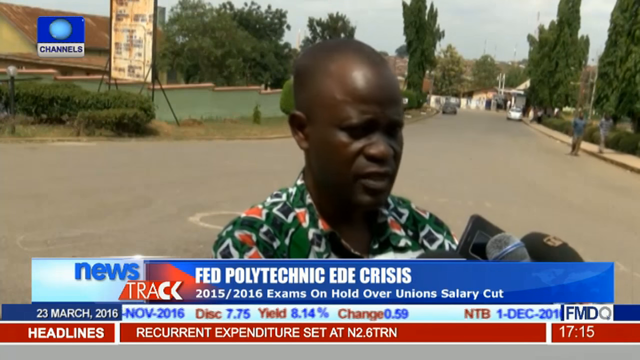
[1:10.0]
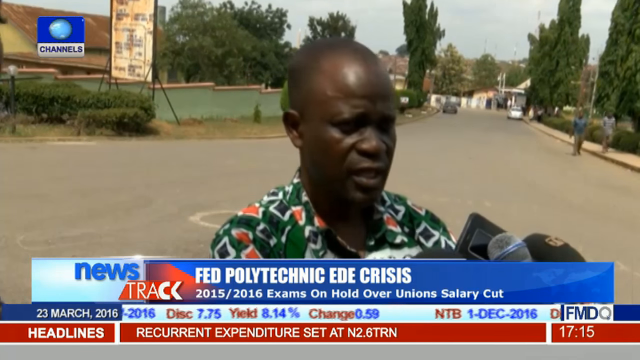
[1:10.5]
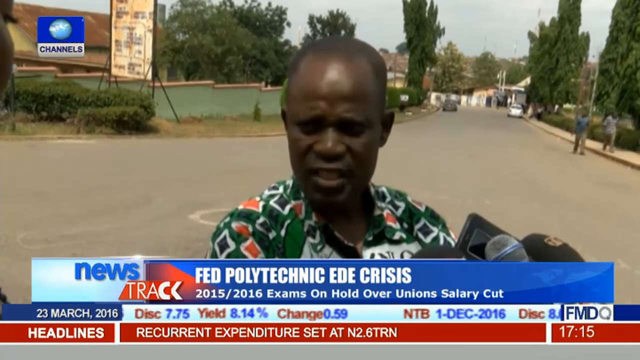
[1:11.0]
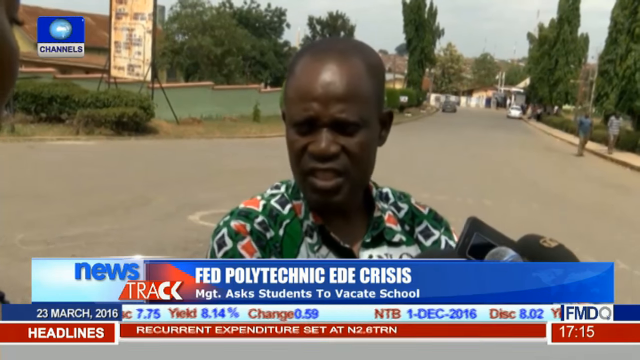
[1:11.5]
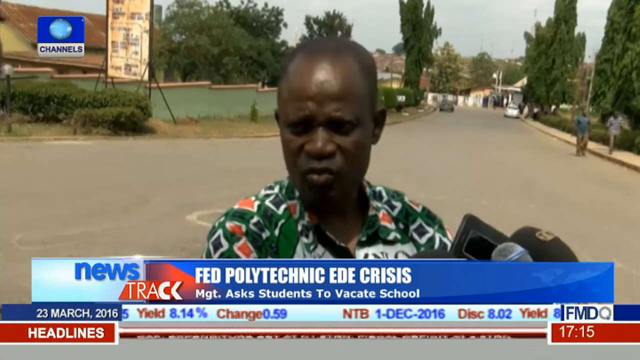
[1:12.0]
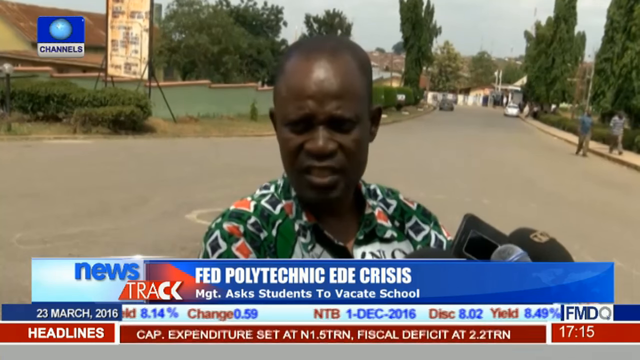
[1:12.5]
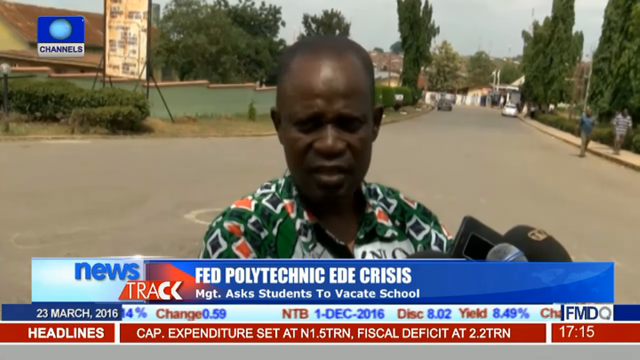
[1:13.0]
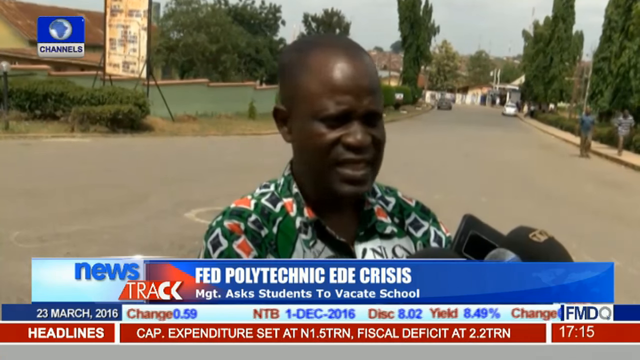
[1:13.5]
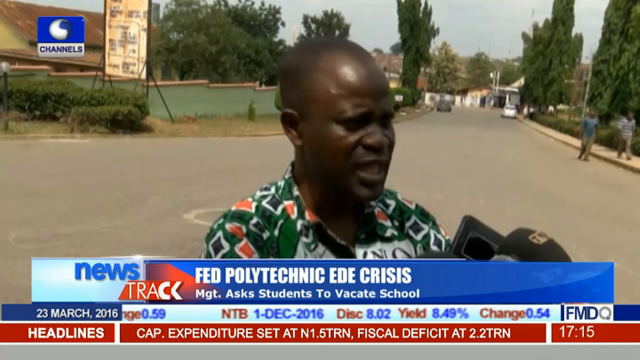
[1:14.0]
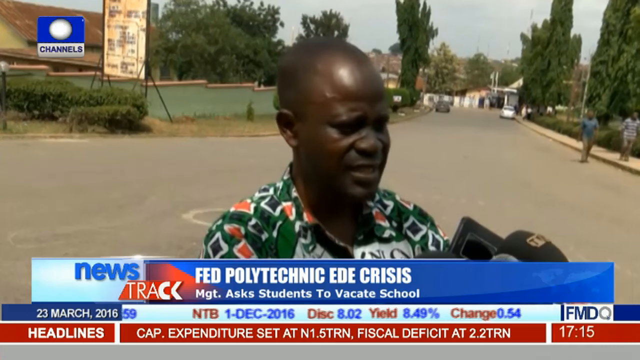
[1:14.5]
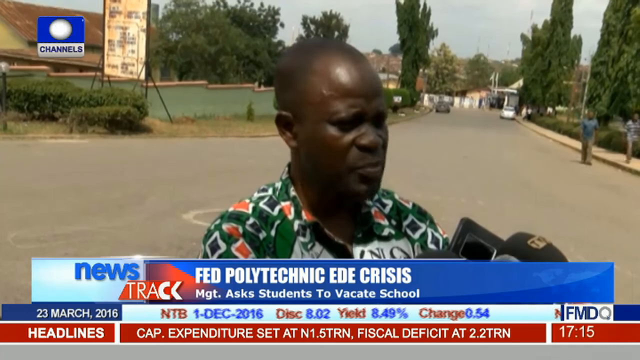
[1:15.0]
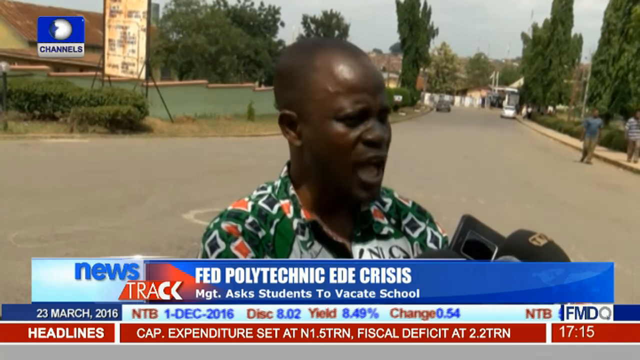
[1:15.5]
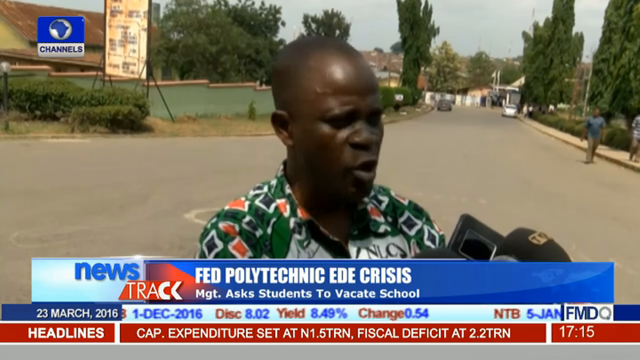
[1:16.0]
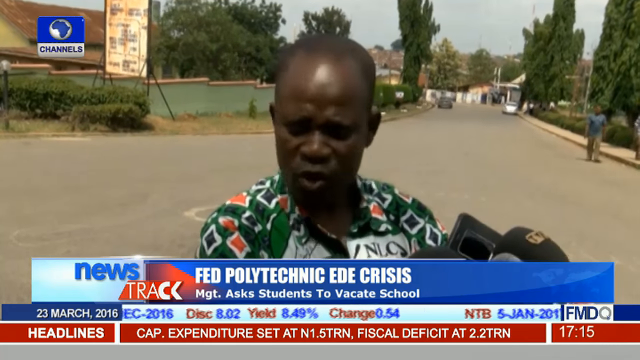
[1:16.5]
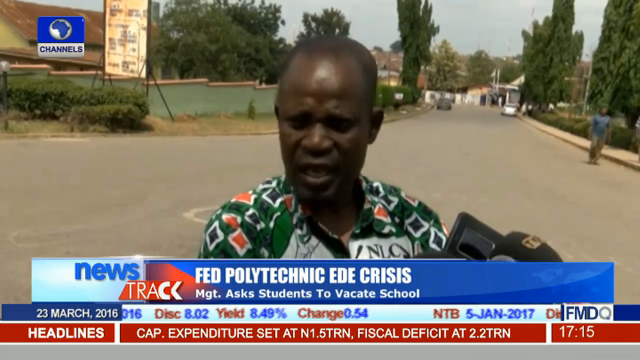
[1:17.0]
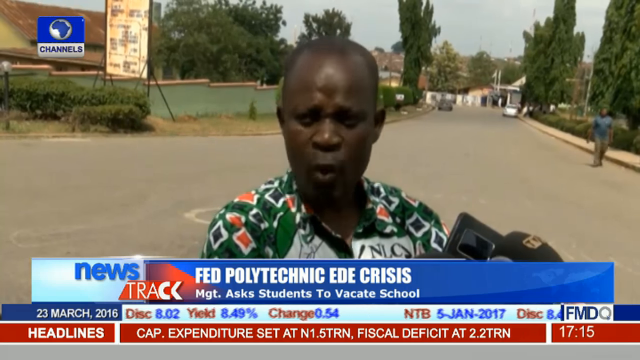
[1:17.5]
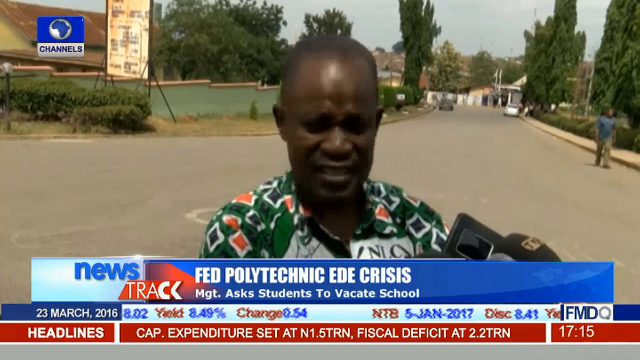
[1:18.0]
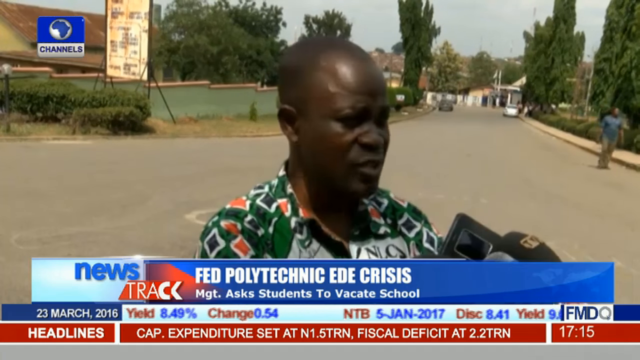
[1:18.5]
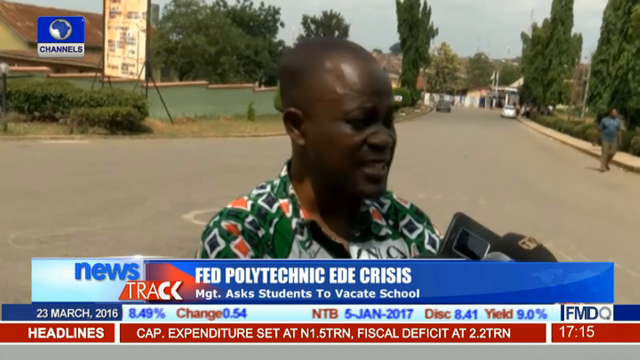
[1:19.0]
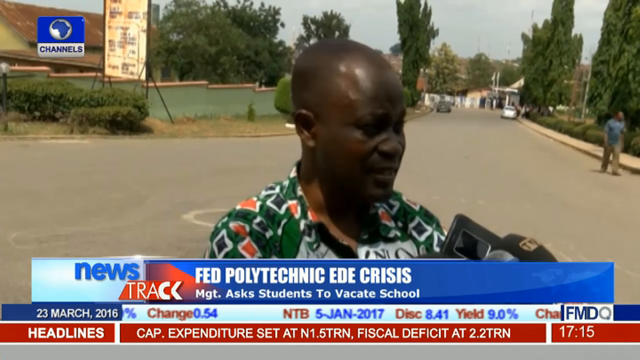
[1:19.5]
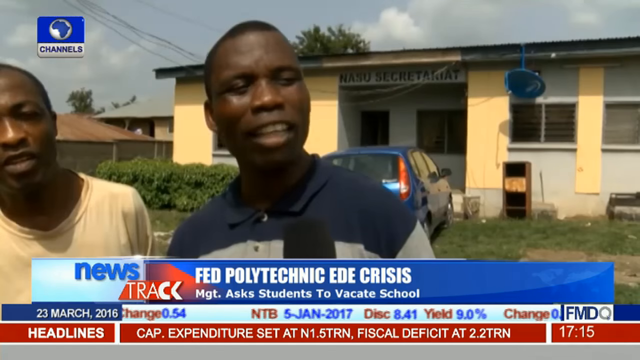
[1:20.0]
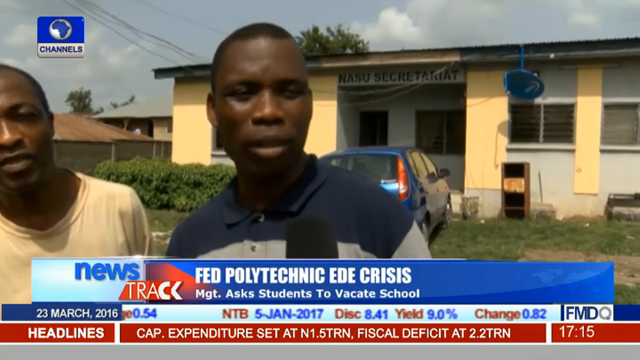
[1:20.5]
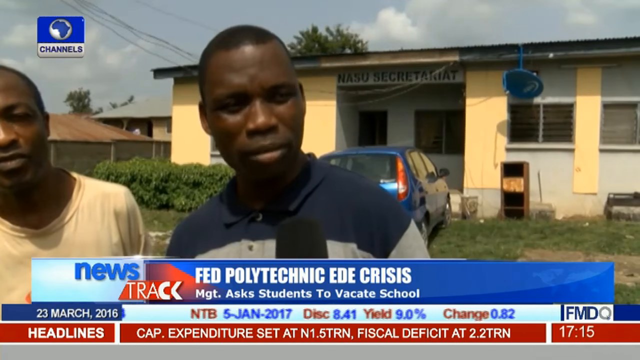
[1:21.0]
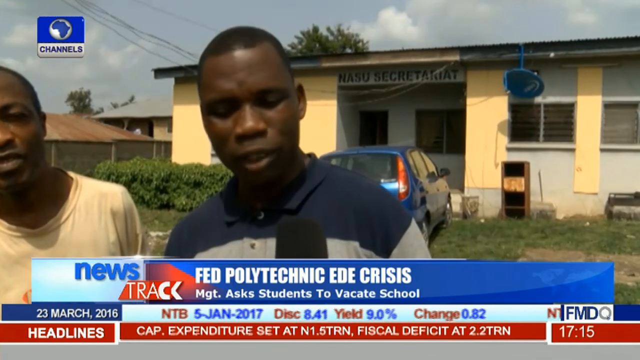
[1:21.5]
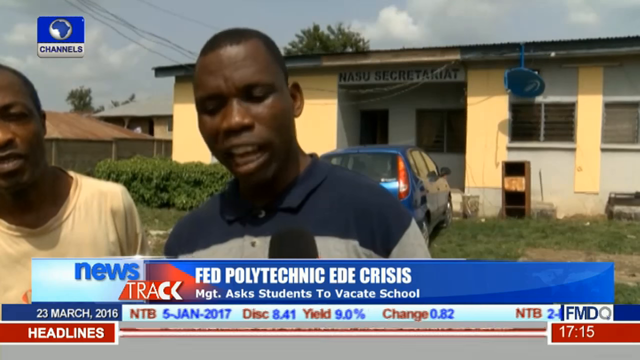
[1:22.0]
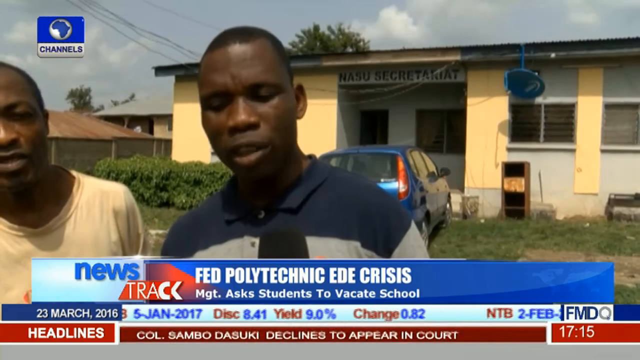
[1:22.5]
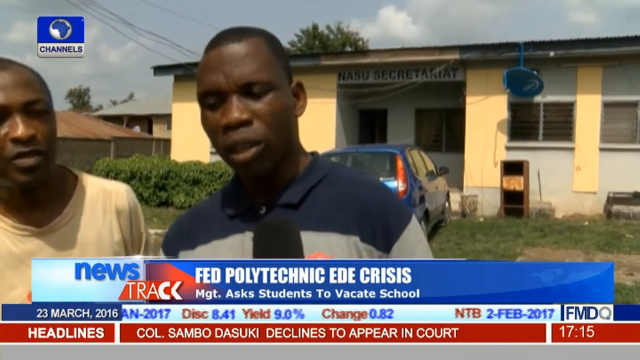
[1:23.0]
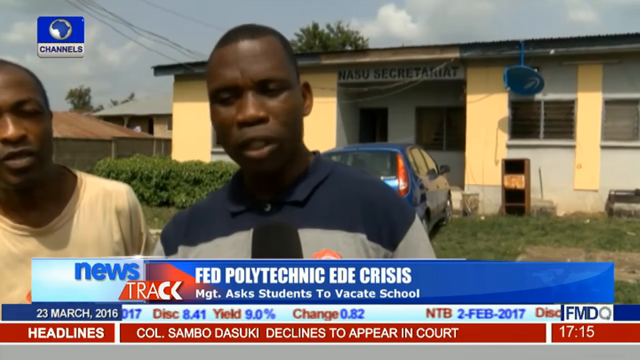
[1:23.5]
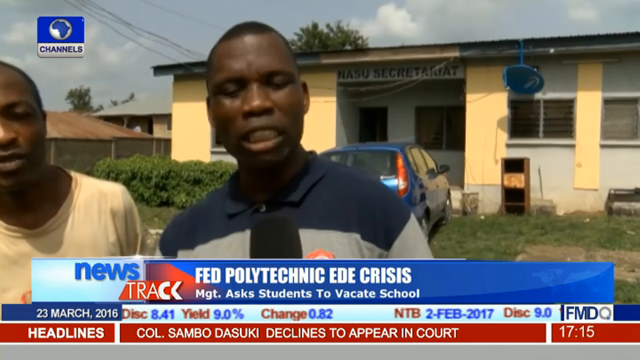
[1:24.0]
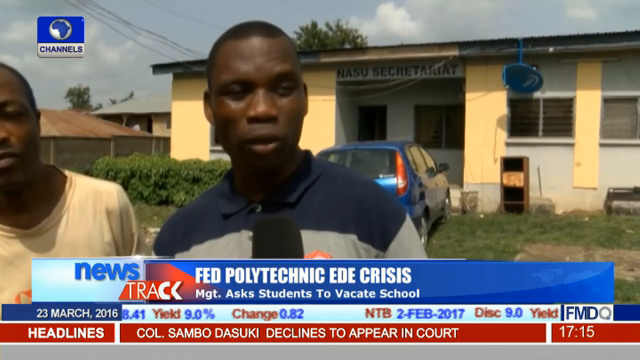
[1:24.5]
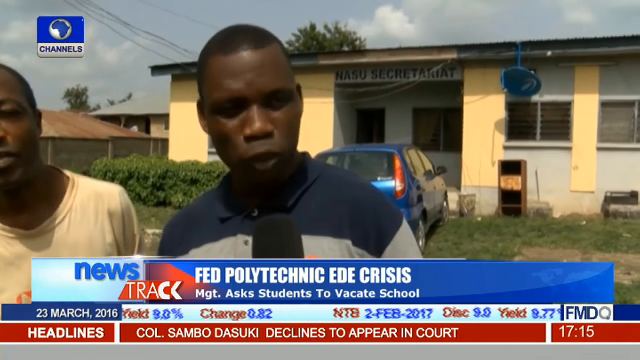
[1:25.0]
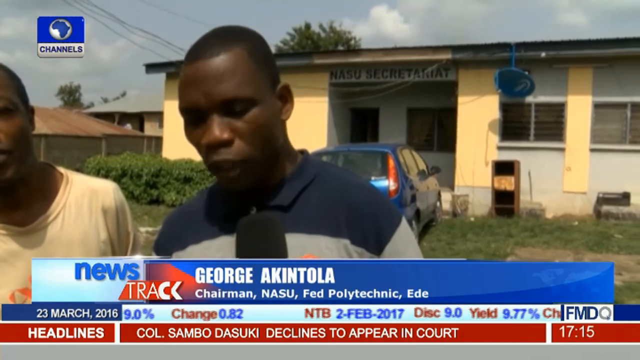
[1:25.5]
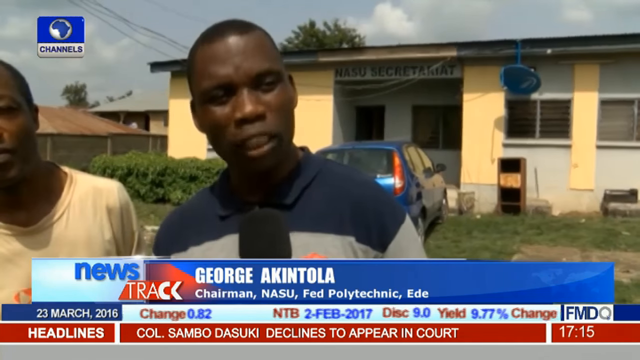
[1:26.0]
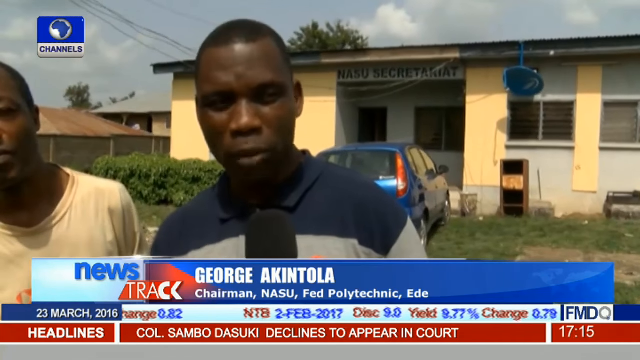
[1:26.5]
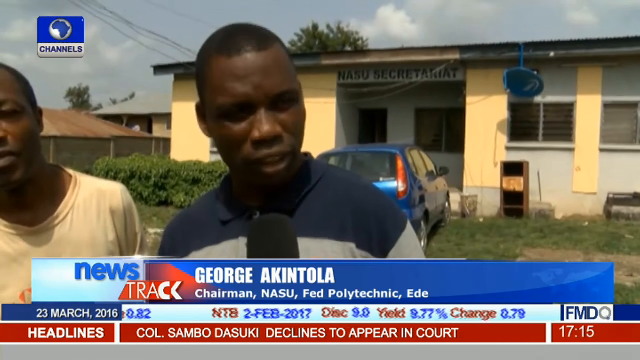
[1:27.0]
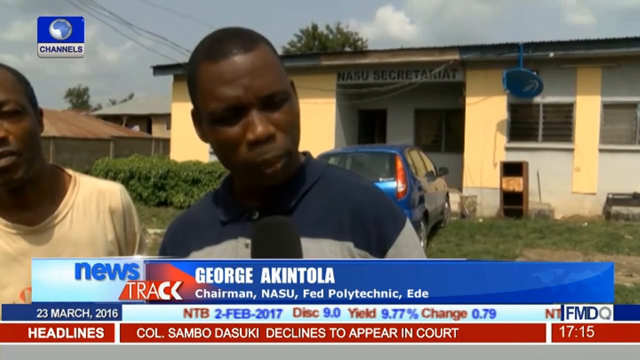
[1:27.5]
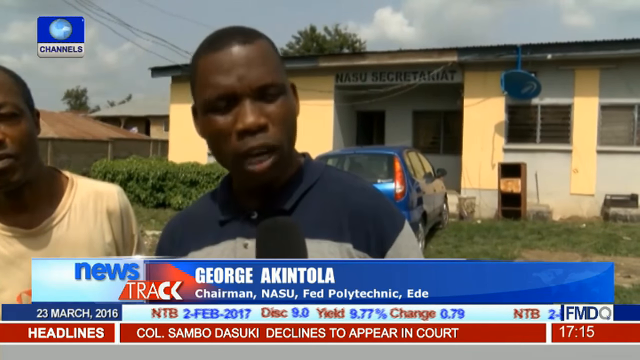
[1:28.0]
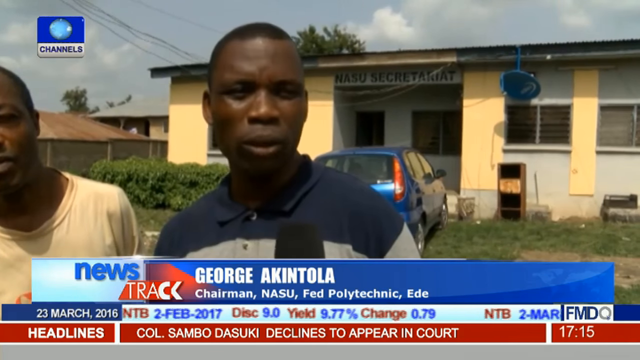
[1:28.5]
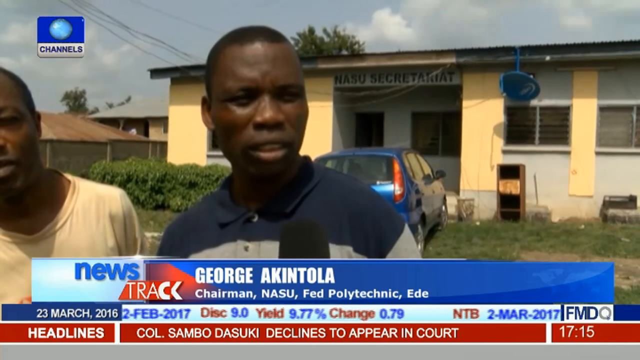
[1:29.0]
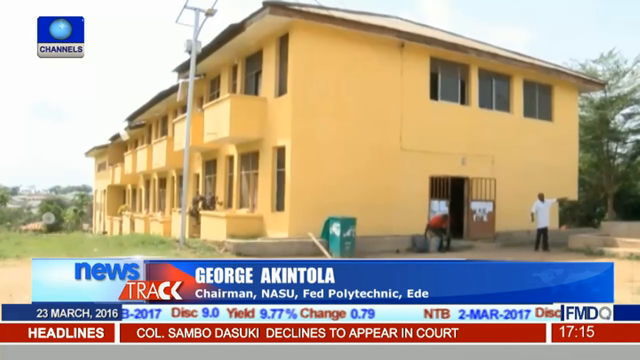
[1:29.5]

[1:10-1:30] A black man is interviewed on the street in what looks like a neighborhood, while two men walk down the sidewalk towards him and the reporters. He turns his head to talk to other reporters, then looks back to the middle, speaking as if very confident and trying to get them to understand what is going on. The microphones move as the reporters seem to try to get closer for good audio. The video then changes to another interview with two younger men in front of the yellow building, where a blue car is still parked. The main man being interviewed is named George, chairman of the 'Nasu polytechnic ede'. He reads something to the reporters and also speaks to them, very confident and forceful.